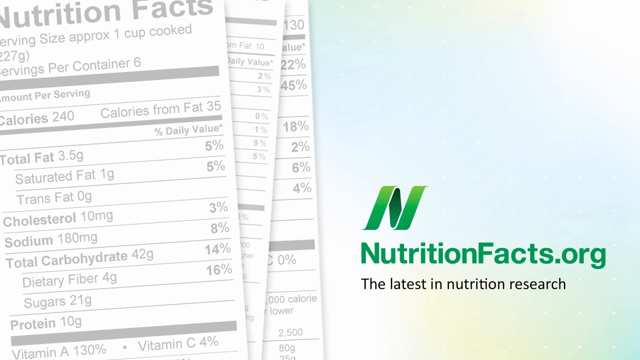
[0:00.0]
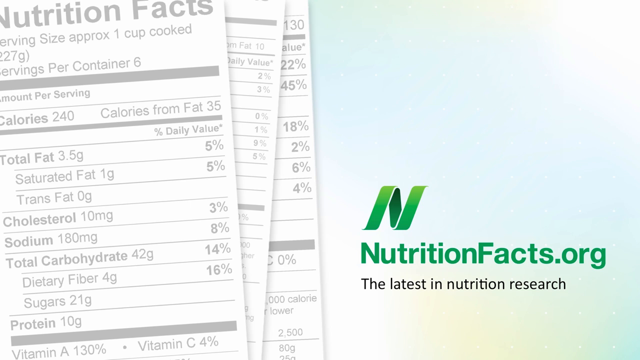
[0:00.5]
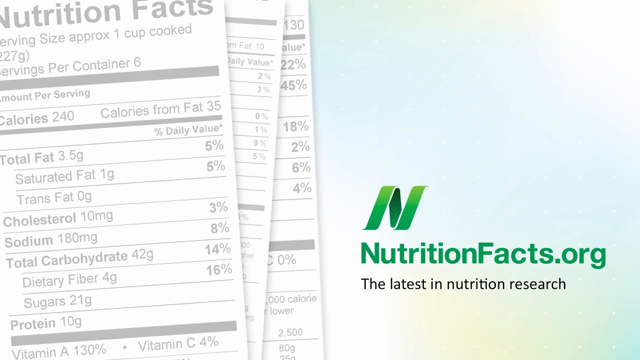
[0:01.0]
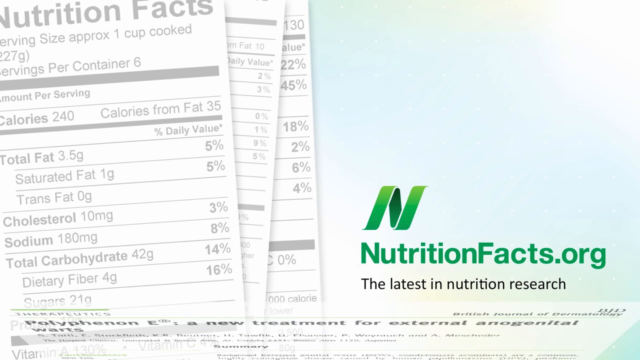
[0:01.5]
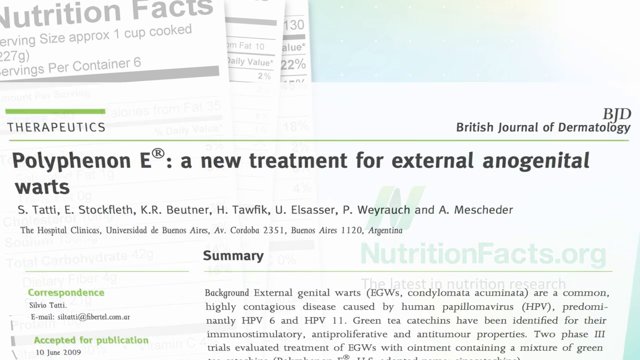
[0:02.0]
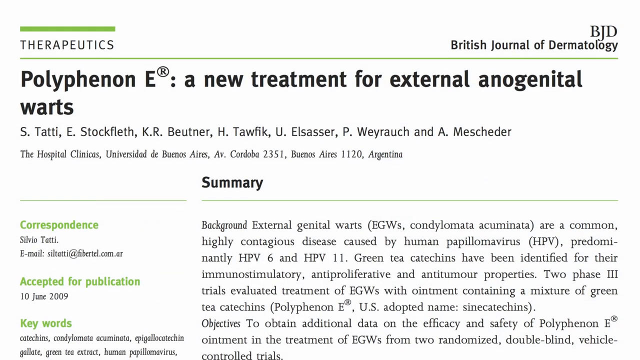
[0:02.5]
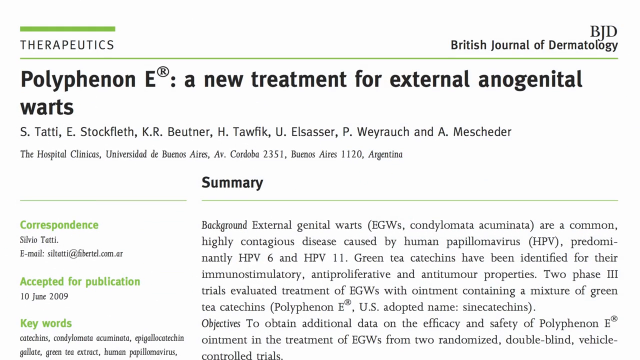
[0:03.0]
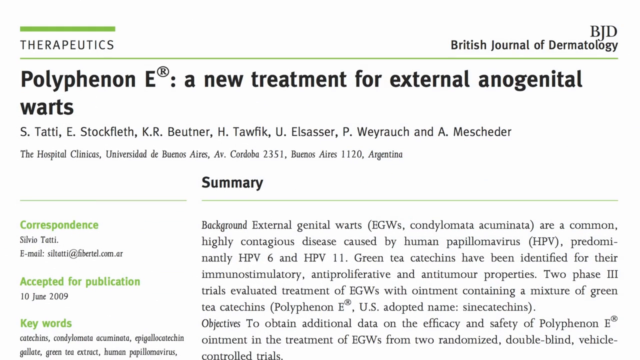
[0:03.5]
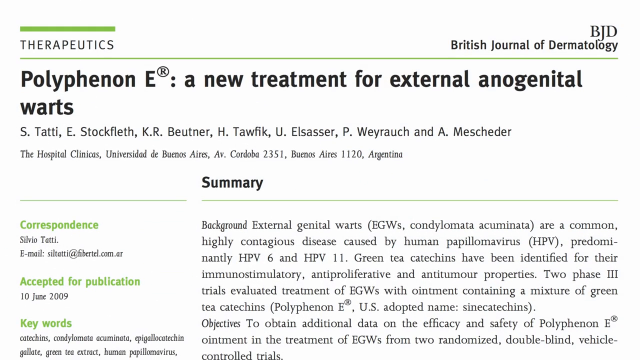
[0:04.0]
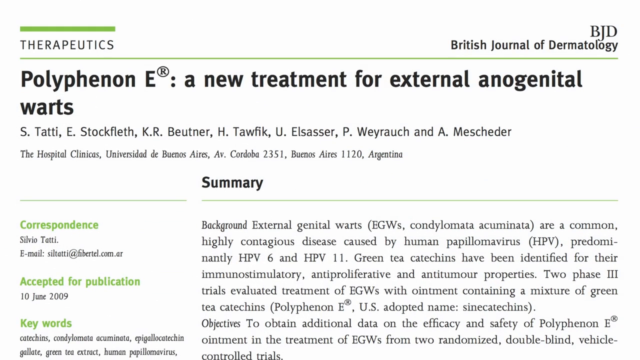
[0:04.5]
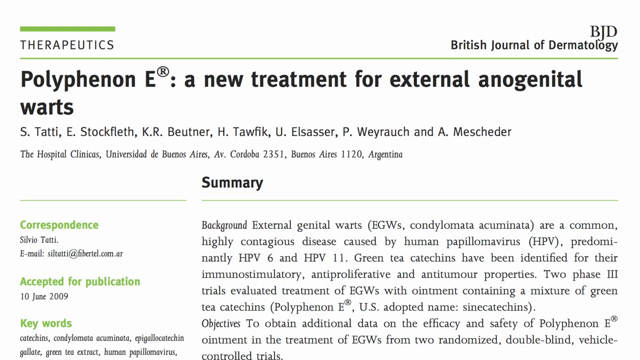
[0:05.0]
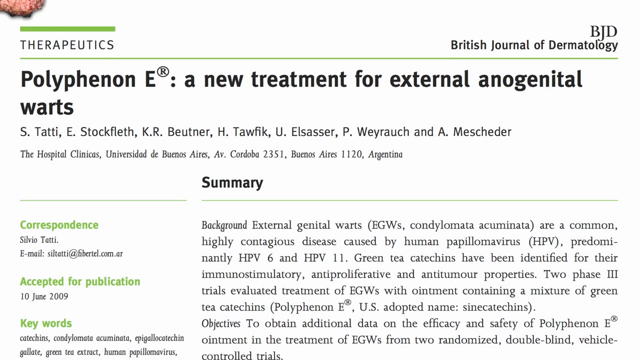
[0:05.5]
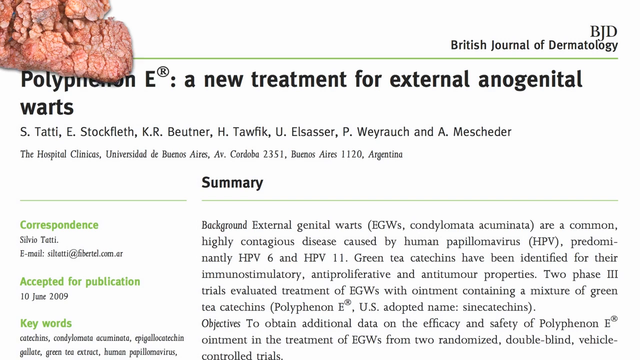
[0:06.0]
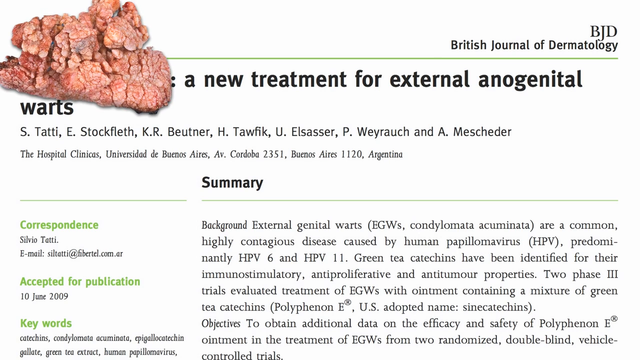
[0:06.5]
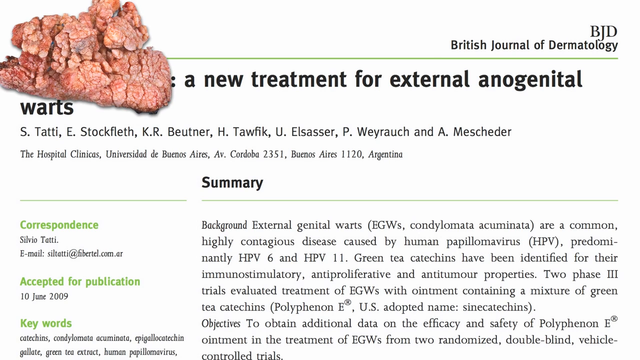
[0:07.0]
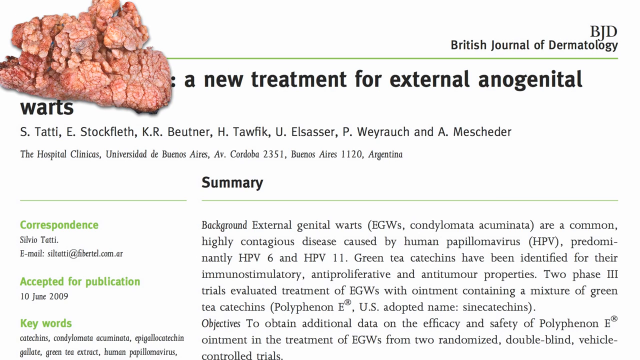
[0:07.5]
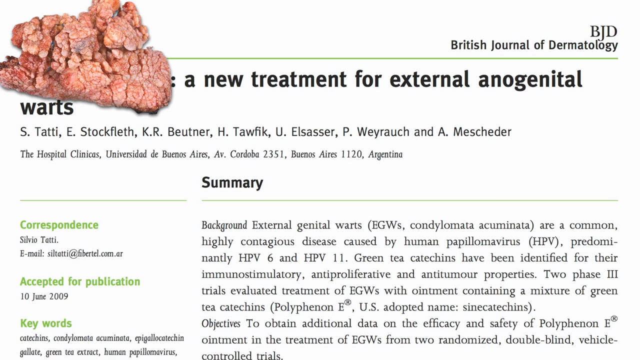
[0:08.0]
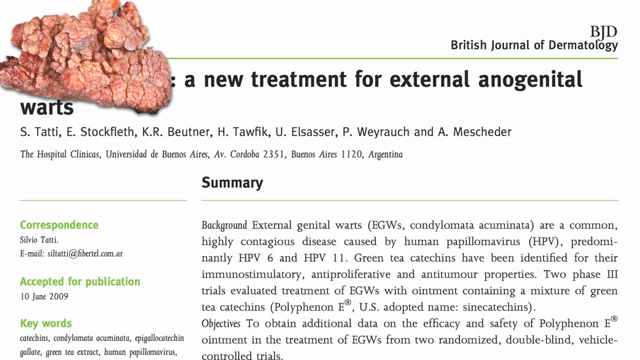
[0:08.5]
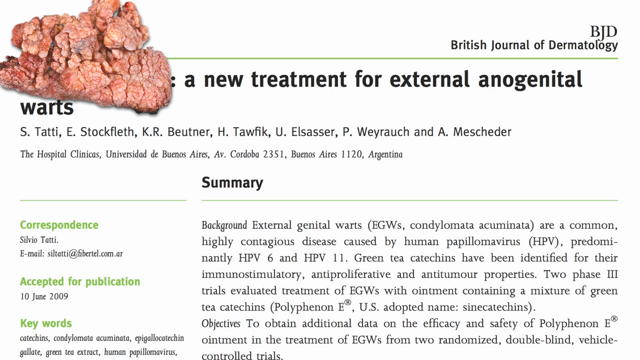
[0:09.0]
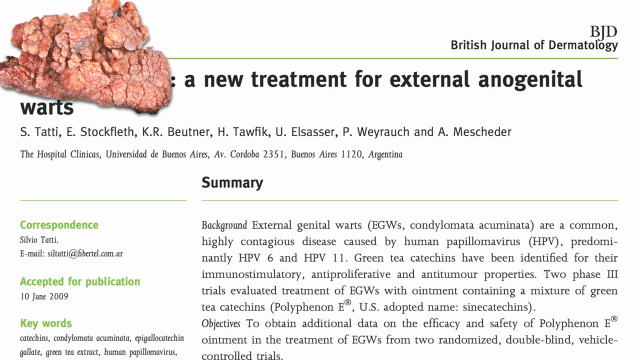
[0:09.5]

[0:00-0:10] This nutritionfacts.org video opens with a title card. In the next shot, an article flips open, titled "Polyphenol E, a new treatment for external anogenital warts." The screenshot of the article shows that it is from the British Journal of Dermatology, and it mostly displays the authors and a bit of the summary. From the top left corner, an image of a bodily abnormality, presumably an anogenital wart, slides into the top left quadrant of the frame. It is pink and has some texture, with lines running through it, and it is not obvious what part of the body it is.